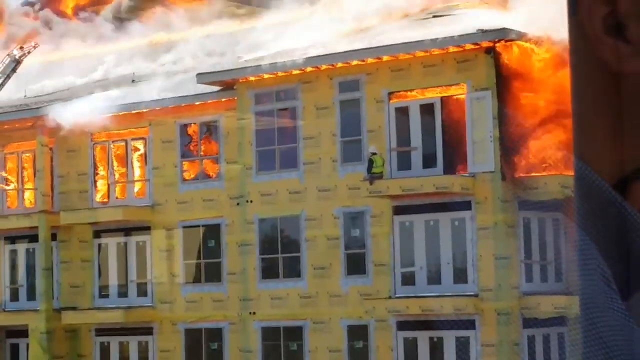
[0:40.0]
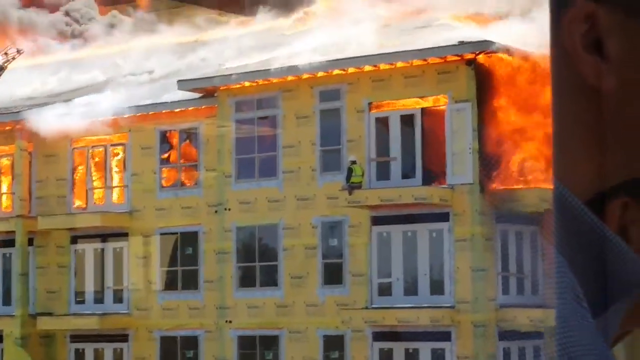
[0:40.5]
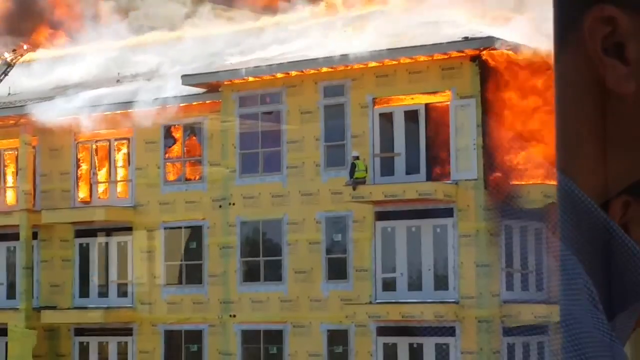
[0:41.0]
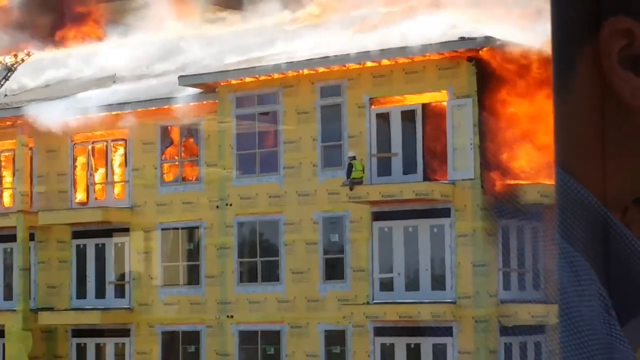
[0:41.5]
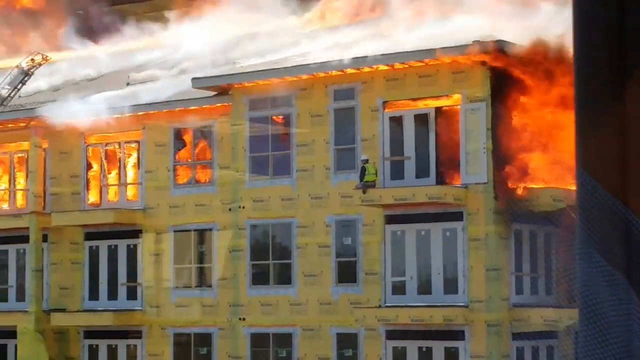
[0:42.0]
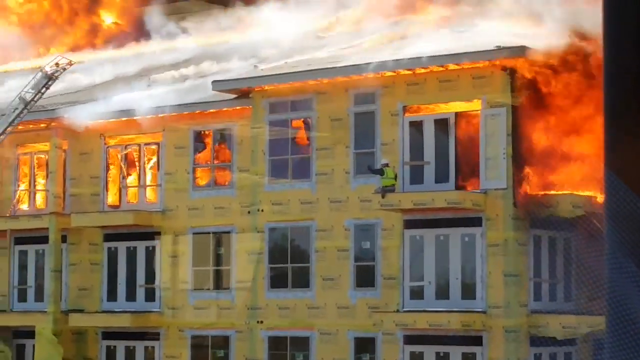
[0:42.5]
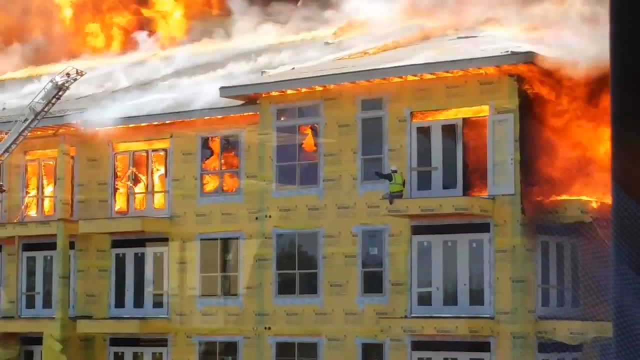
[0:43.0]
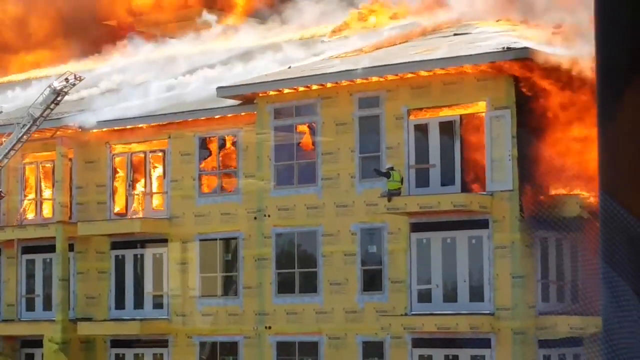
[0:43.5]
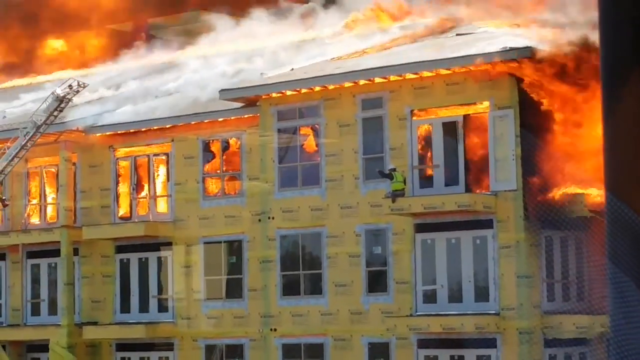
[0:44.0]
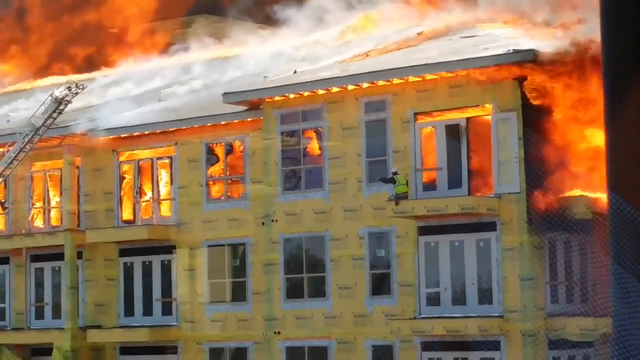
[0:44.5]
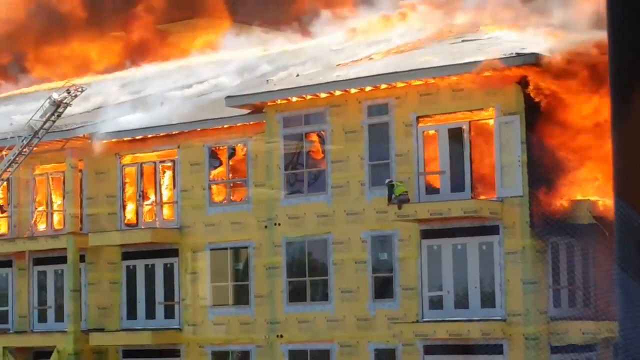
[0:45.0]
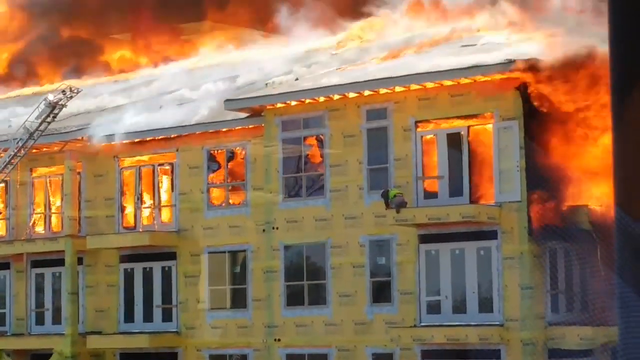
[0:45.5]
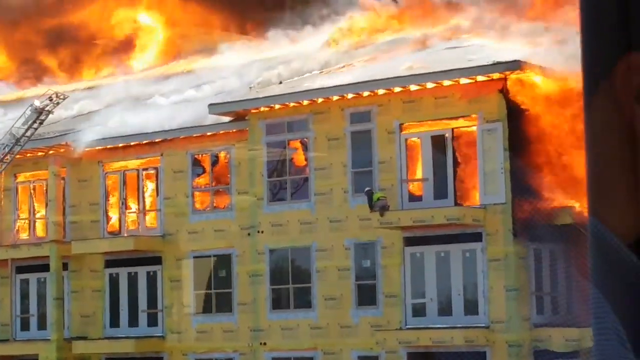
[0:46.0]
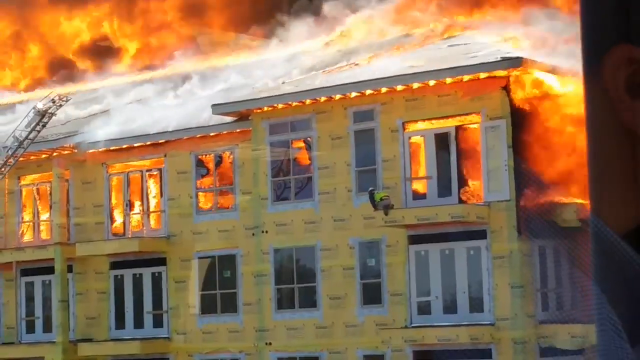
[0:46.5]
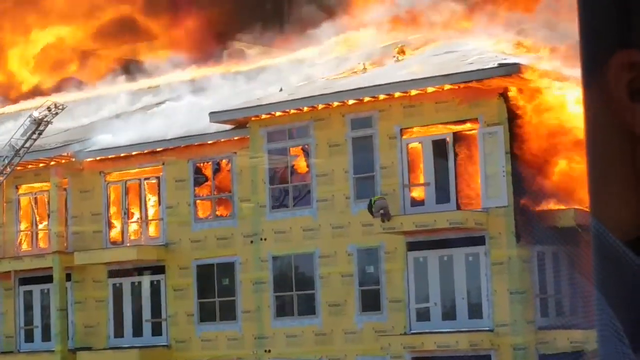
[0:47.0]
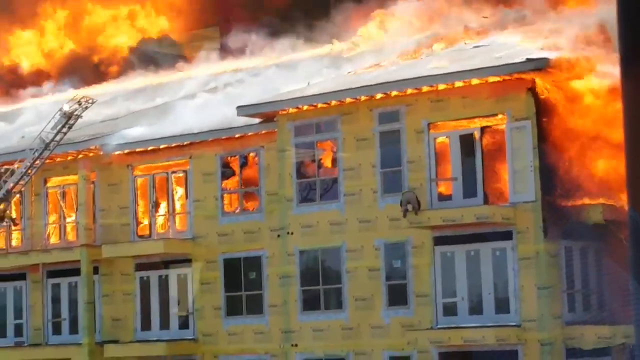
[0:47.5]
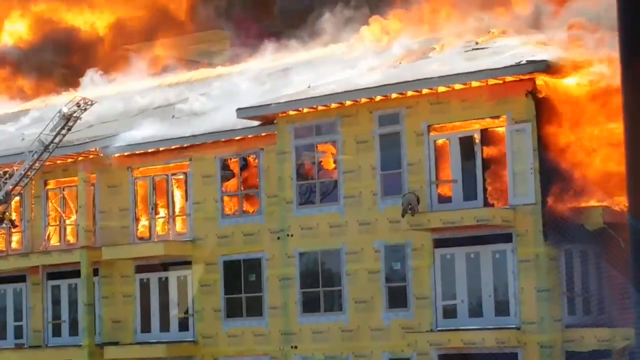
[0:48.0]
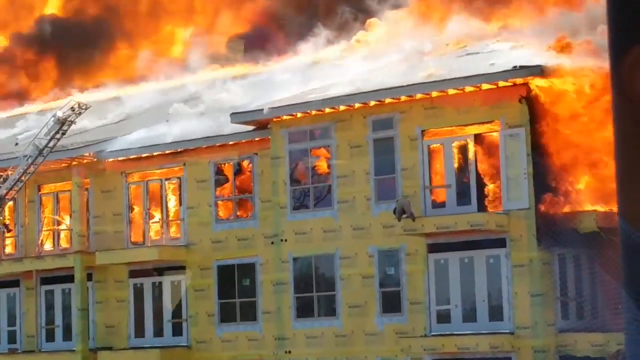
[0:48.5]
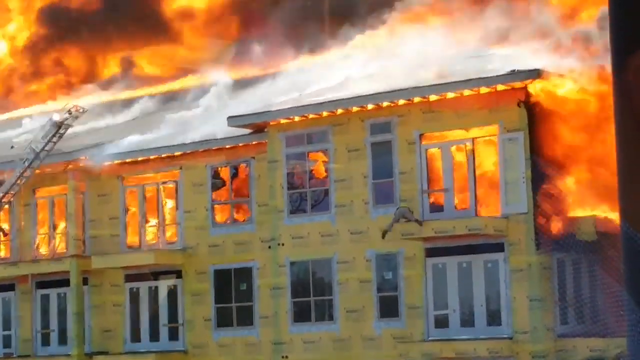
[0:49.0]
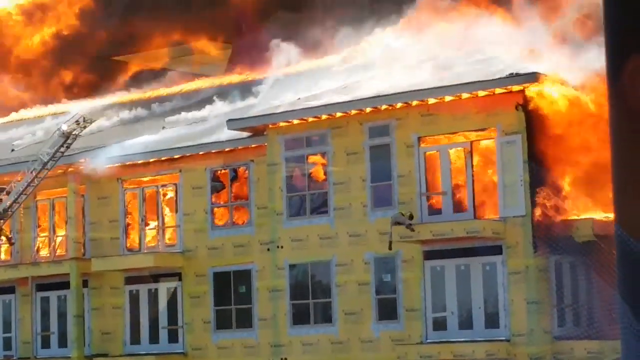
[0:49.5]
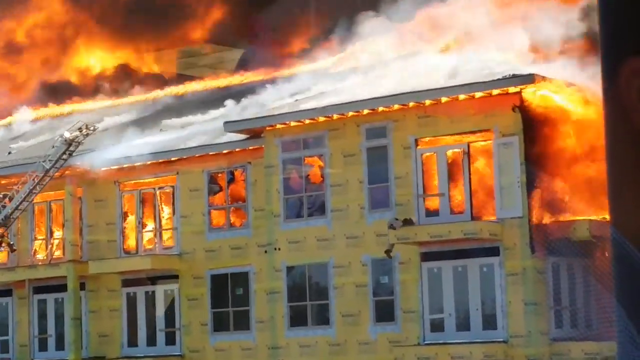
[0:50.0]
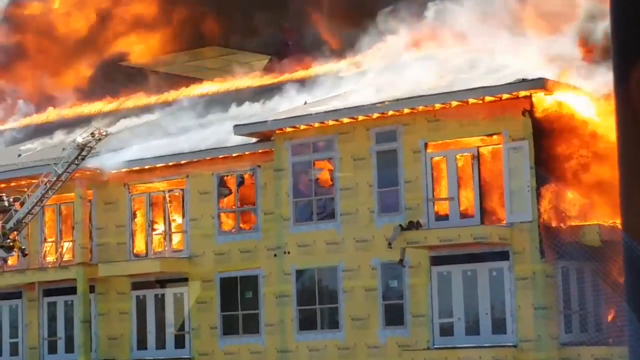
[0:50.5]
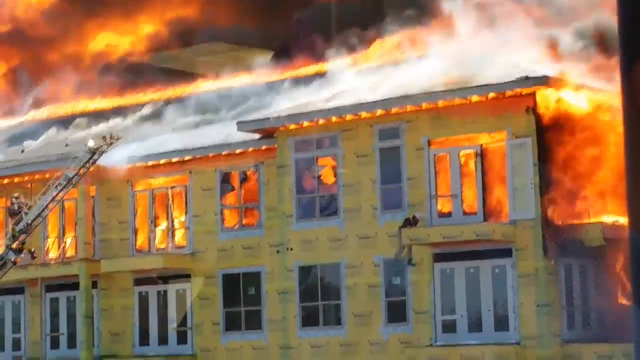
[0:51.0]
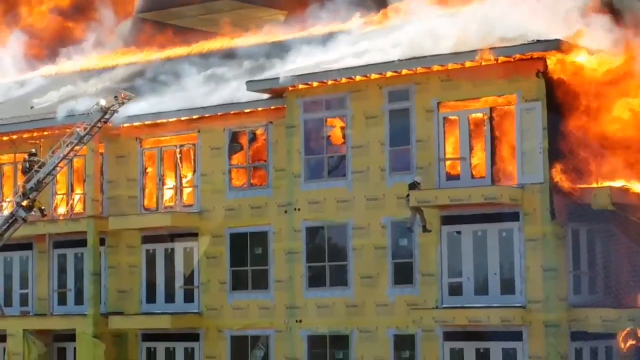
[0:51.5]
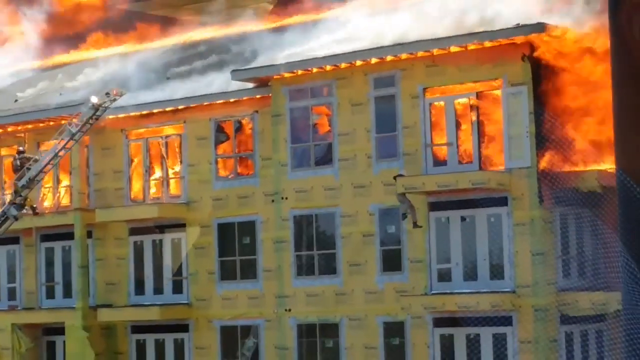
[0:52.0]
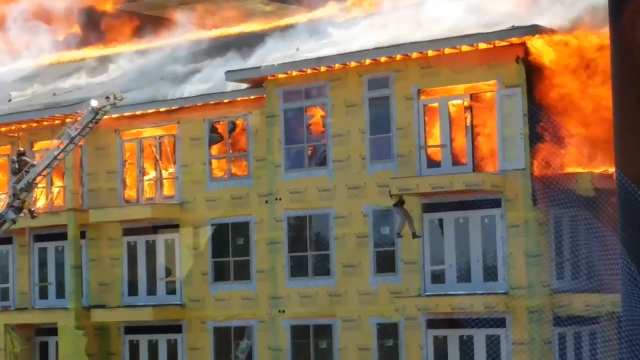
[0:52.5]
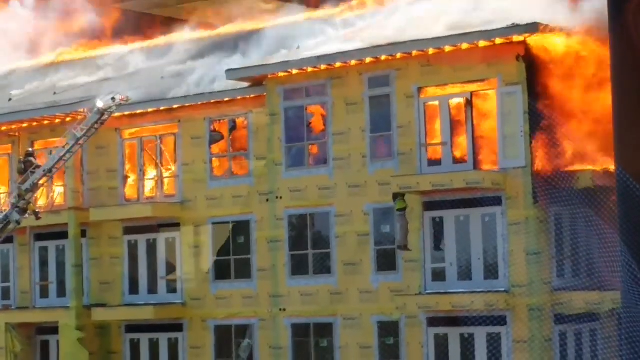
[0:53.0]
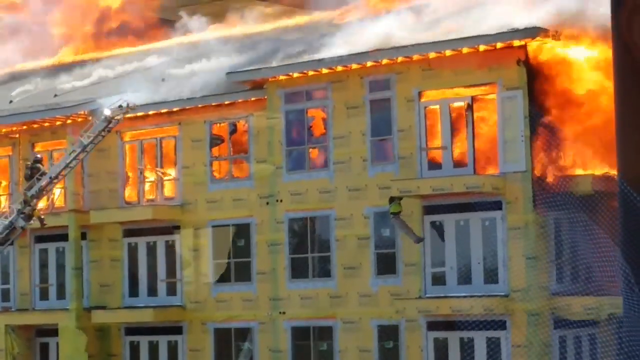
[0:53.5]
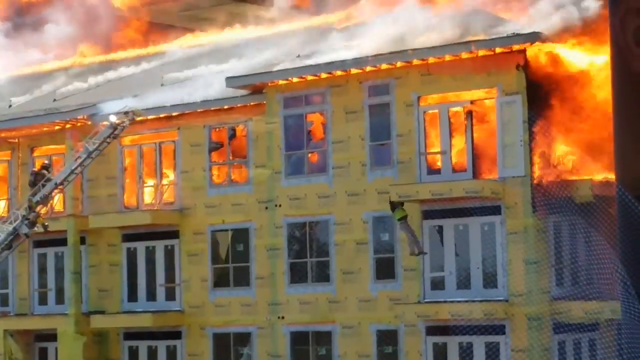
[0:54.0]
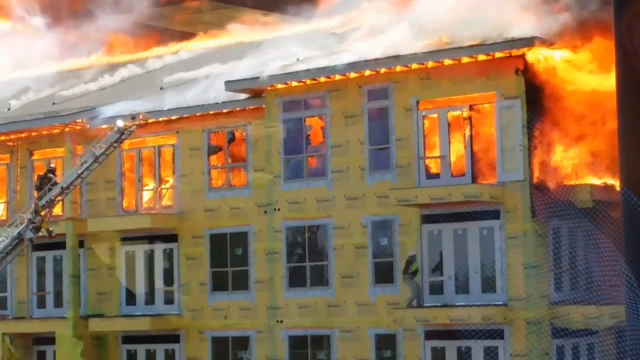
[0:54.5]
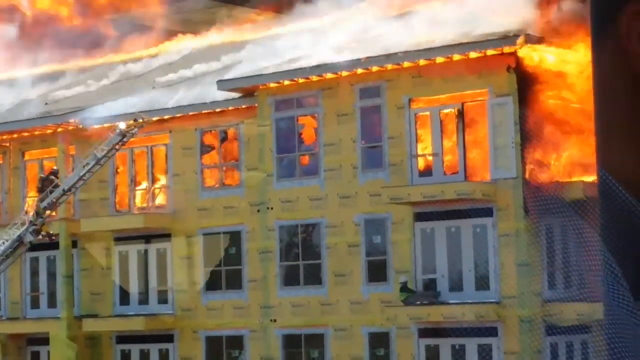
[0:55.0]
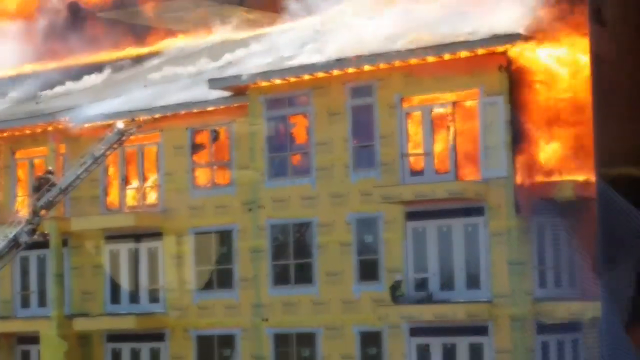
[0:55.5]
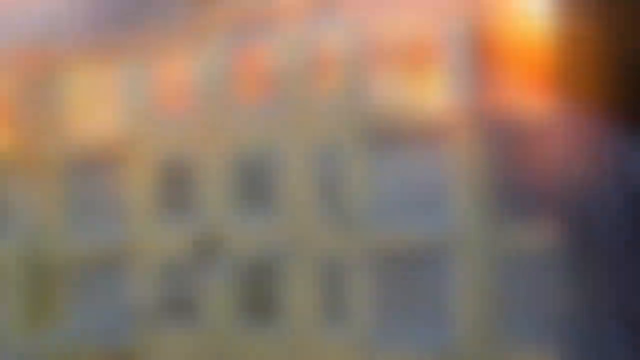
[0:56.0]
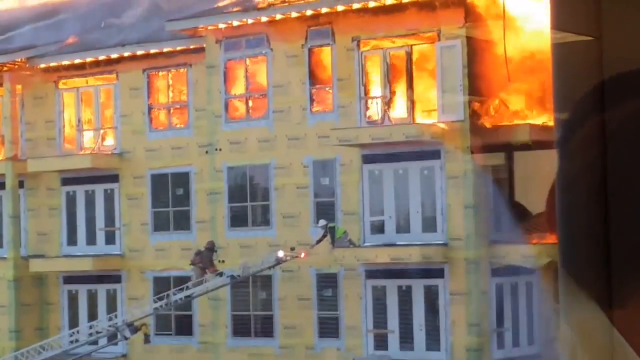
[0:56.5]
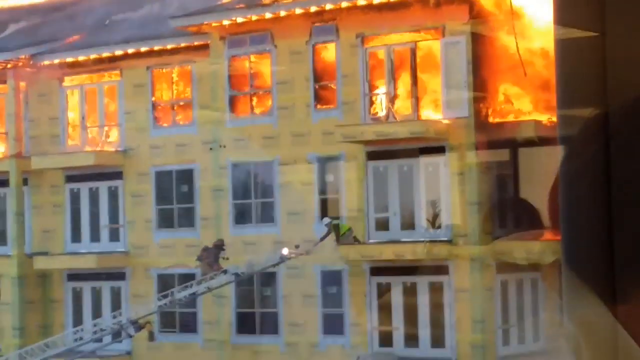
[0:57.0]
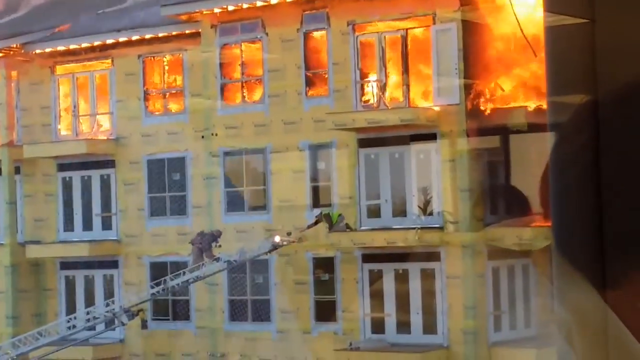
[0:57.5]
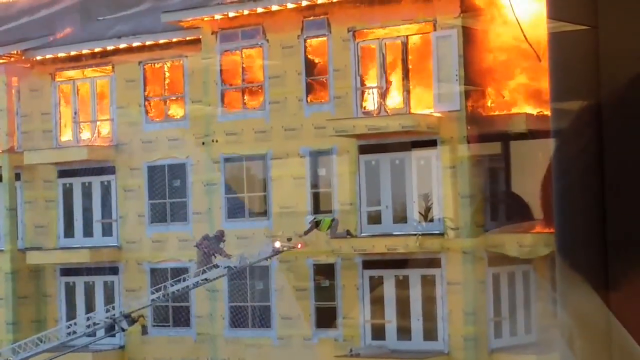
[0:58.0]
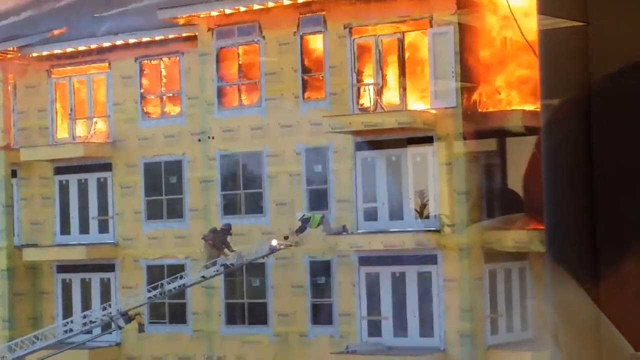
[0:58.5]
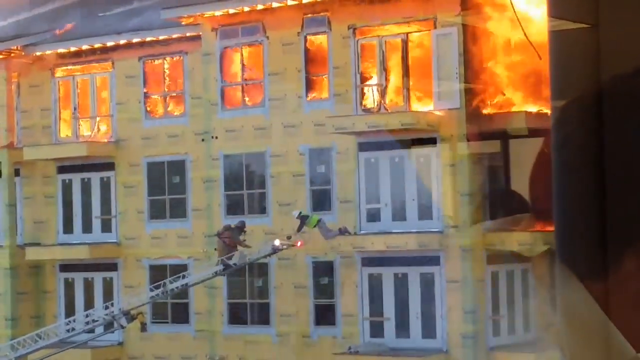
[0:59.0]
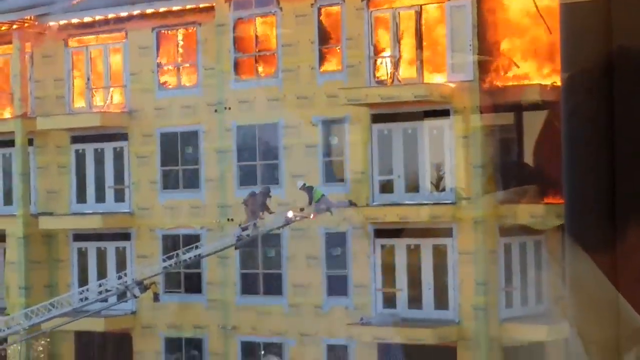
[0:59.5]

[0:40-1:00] The construction worker is trapped out on a balcony in the fire, on either a ledge or a small overhang next to a large white door. The fire is inside the building, with flames above him and all through the building. He wears a safety vest and a white hat. He waves over at somebody, then starts to climb down the side where he is and jumps down to the ledge below him. Next, a fireman comes up a ladder to rescue him; on the left side the fireman, at the very top of the ladder, comes closer to the man. The worker climbs onto the ladder.